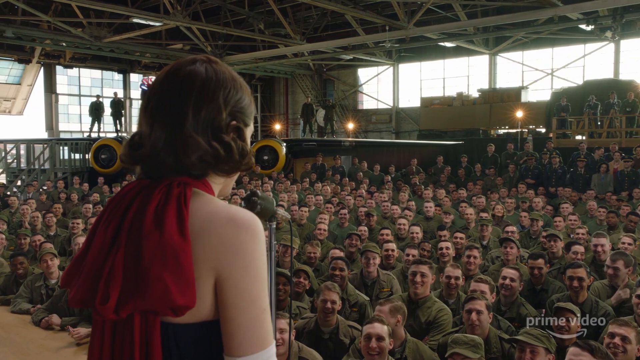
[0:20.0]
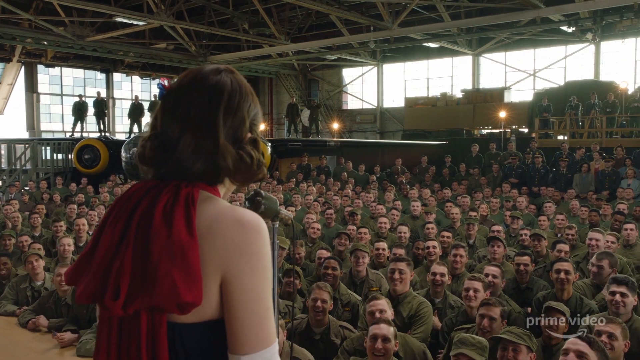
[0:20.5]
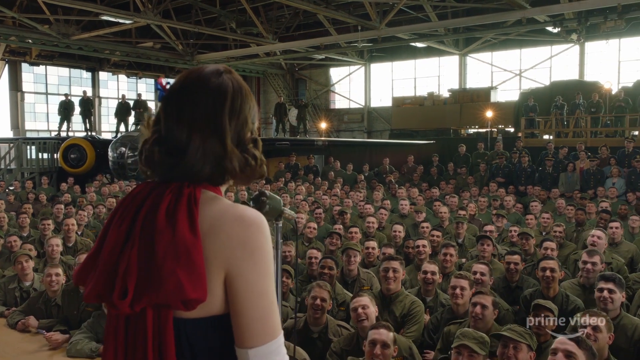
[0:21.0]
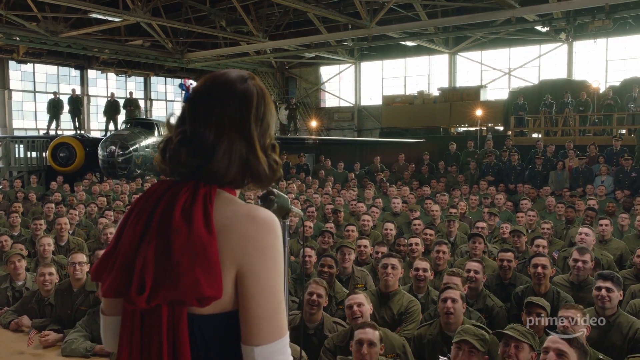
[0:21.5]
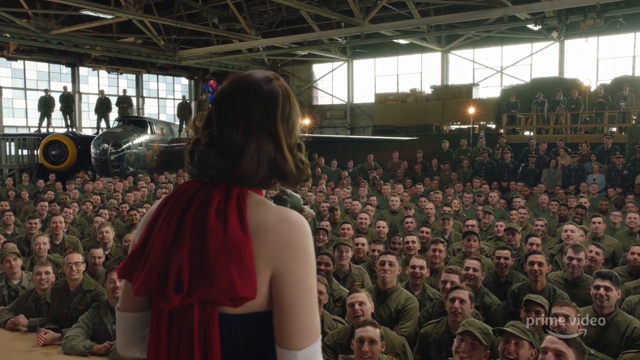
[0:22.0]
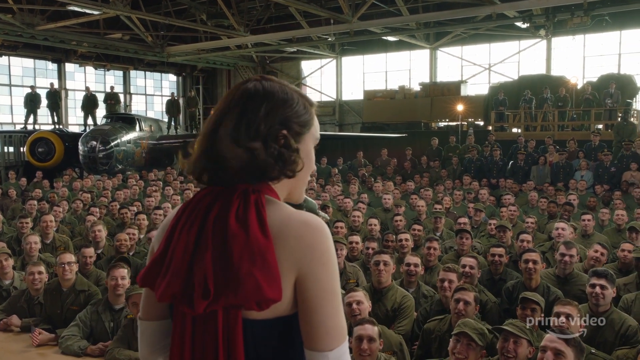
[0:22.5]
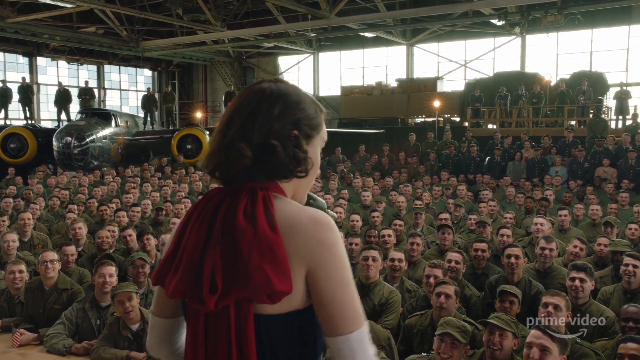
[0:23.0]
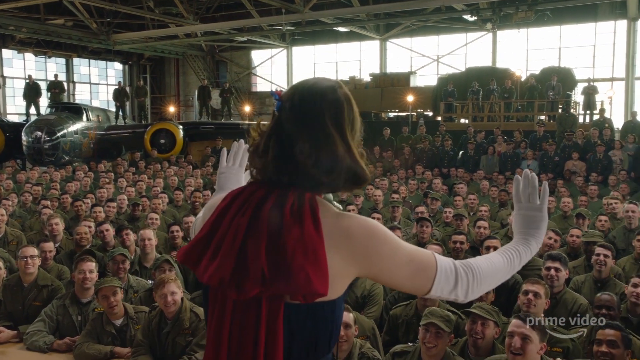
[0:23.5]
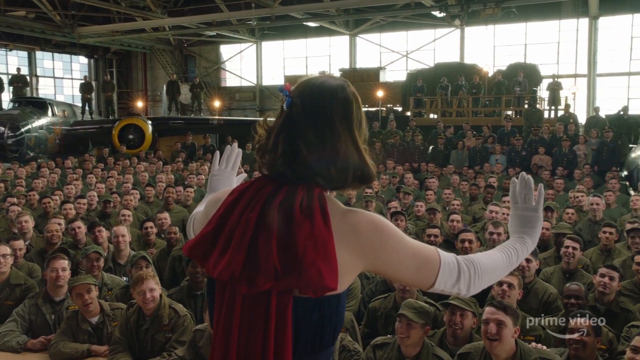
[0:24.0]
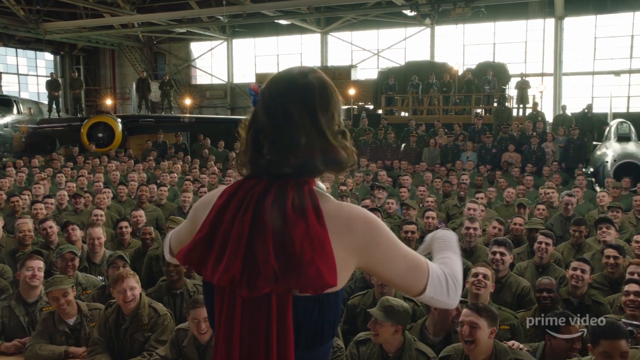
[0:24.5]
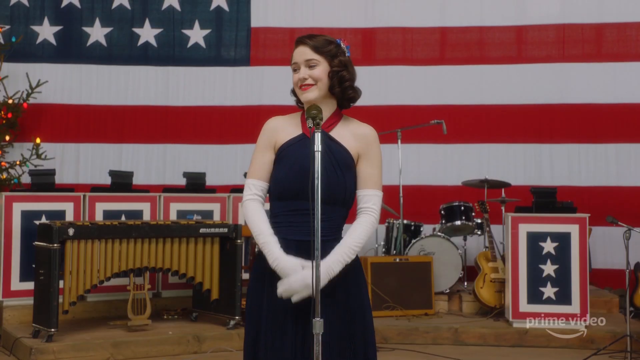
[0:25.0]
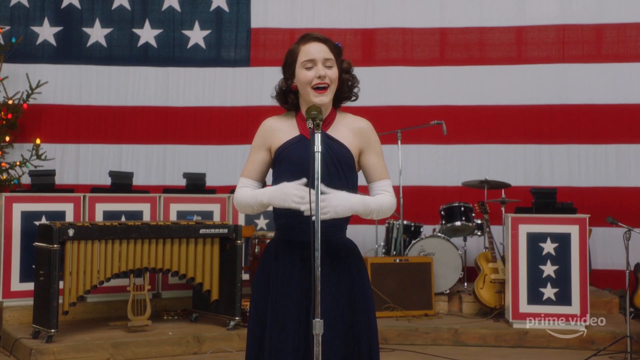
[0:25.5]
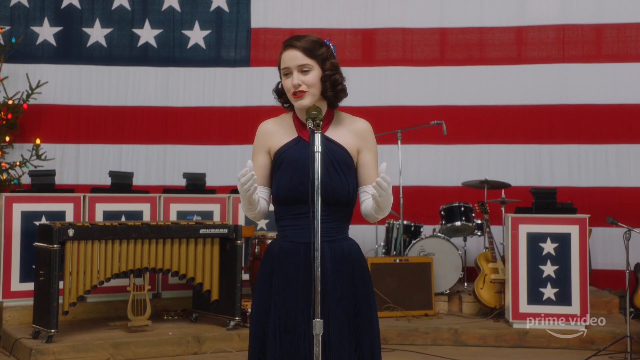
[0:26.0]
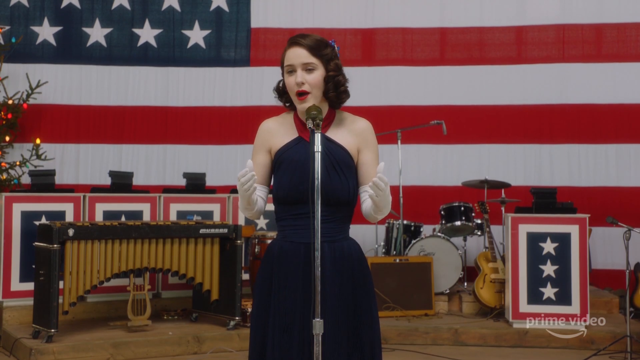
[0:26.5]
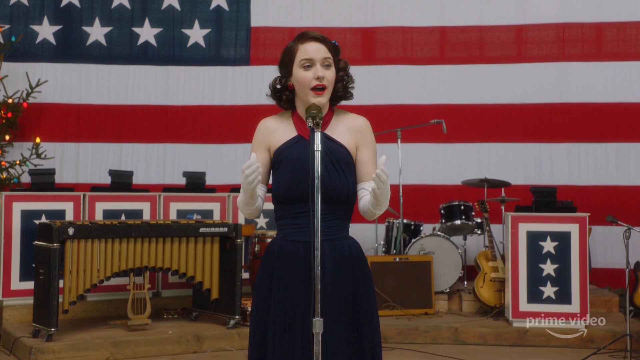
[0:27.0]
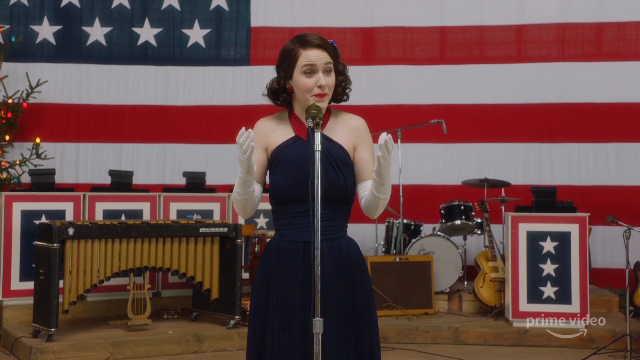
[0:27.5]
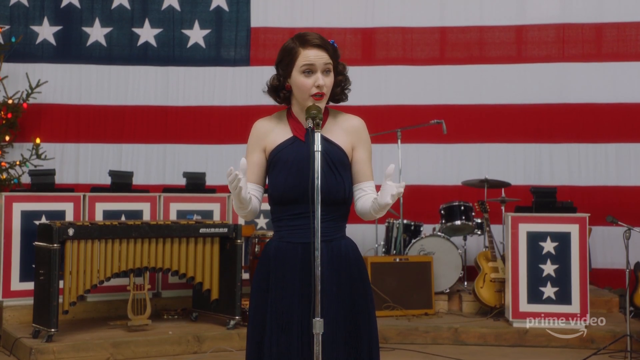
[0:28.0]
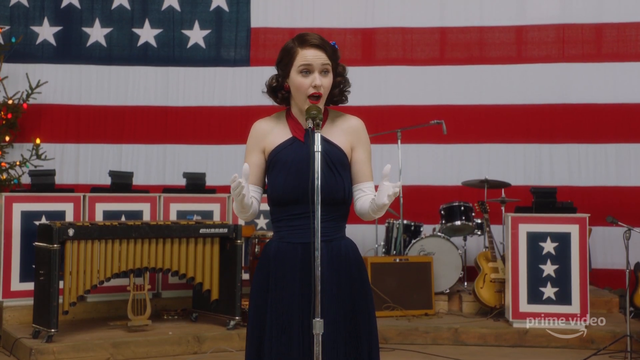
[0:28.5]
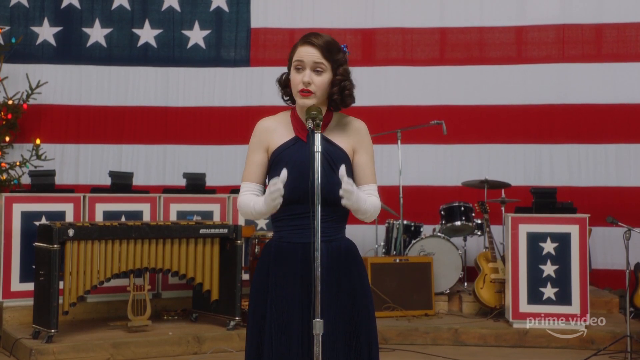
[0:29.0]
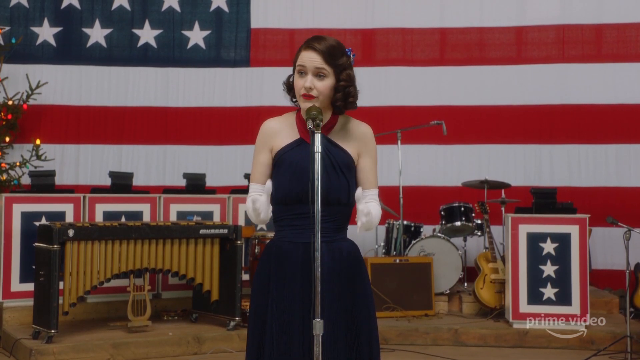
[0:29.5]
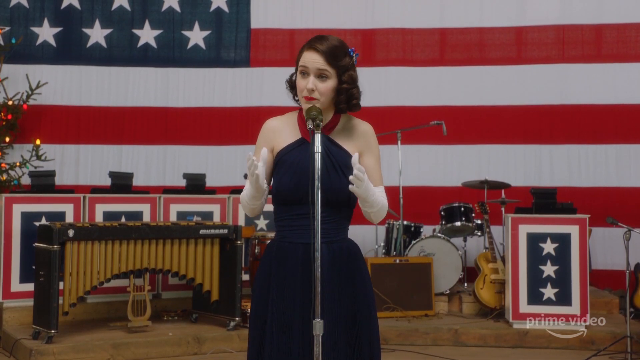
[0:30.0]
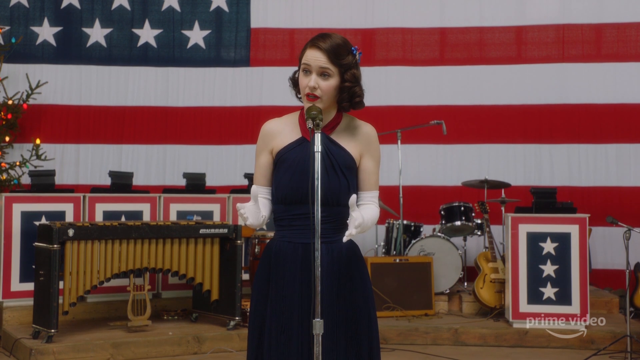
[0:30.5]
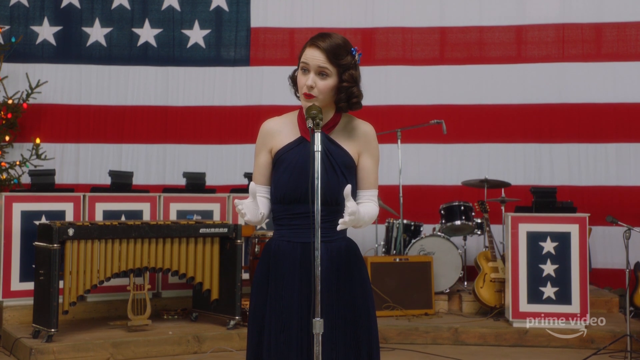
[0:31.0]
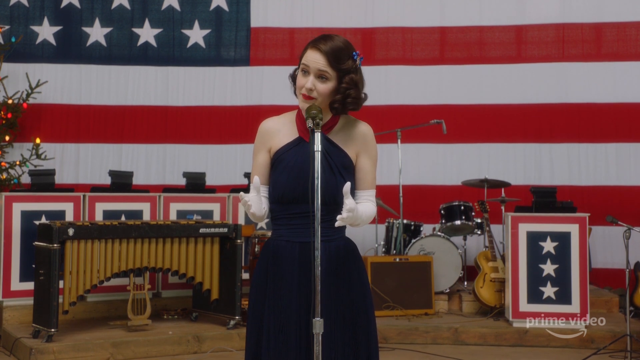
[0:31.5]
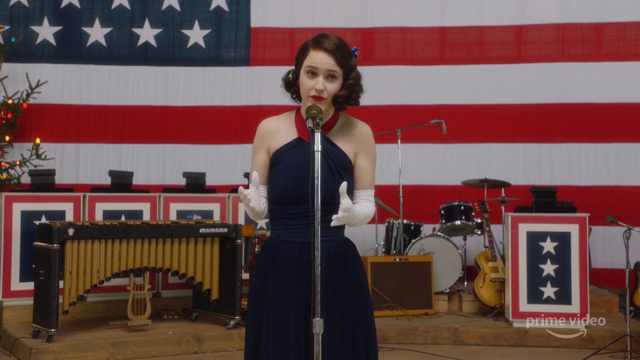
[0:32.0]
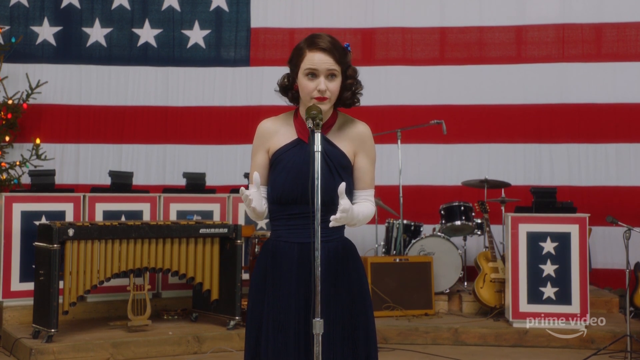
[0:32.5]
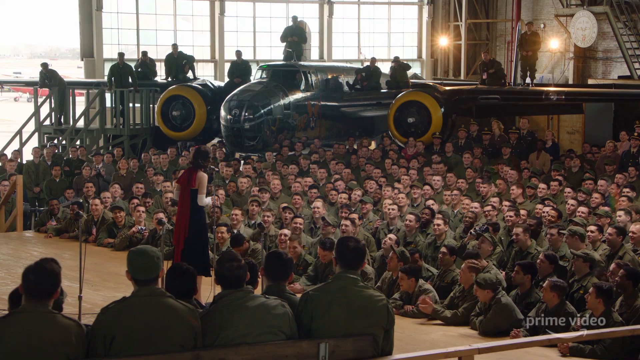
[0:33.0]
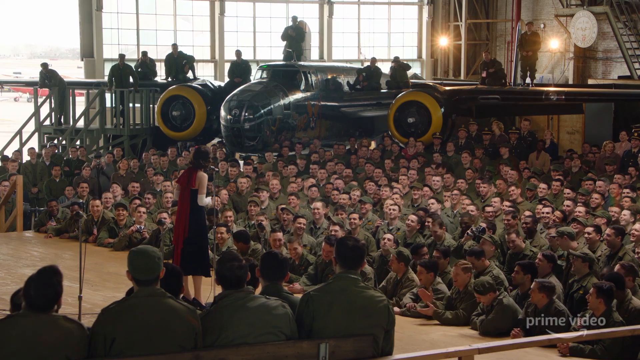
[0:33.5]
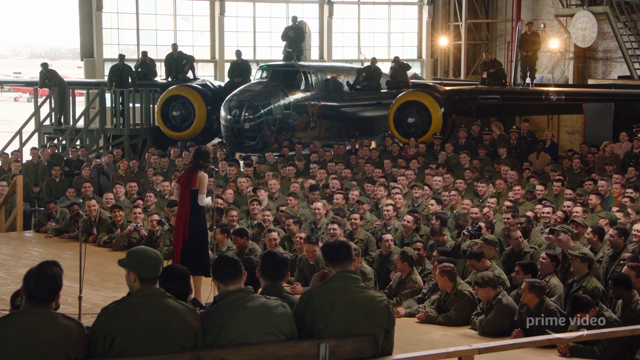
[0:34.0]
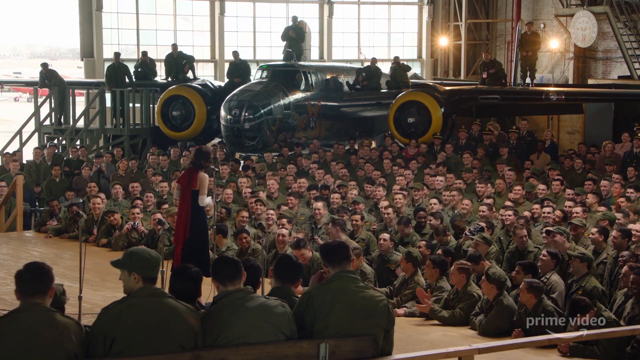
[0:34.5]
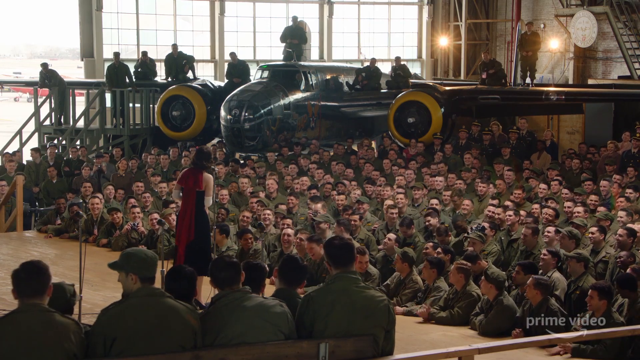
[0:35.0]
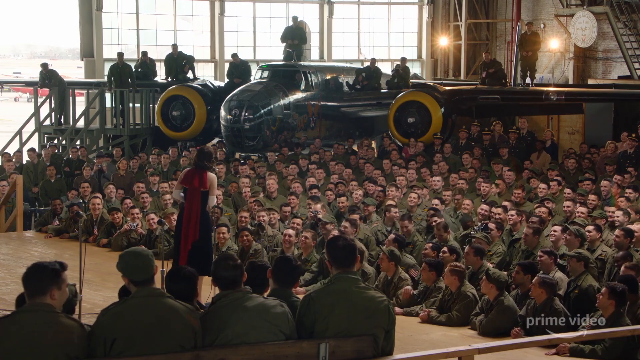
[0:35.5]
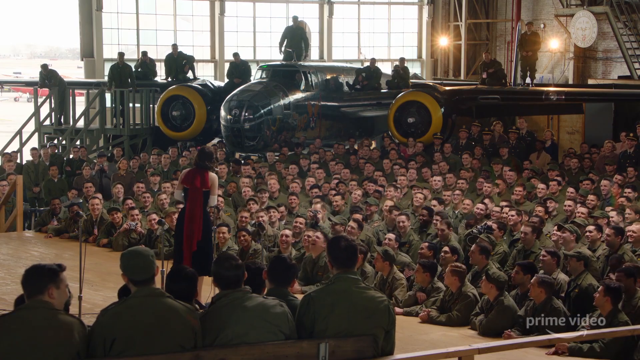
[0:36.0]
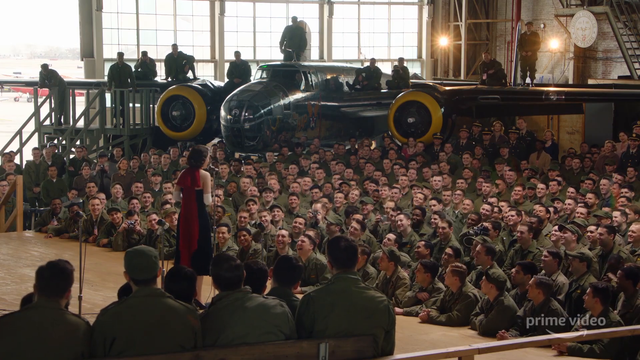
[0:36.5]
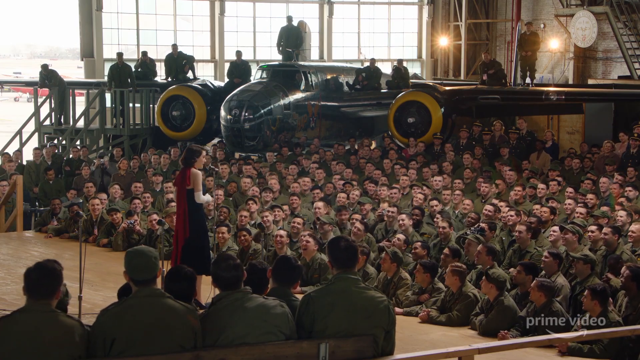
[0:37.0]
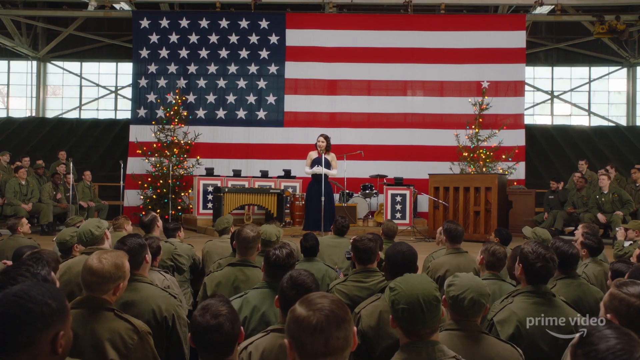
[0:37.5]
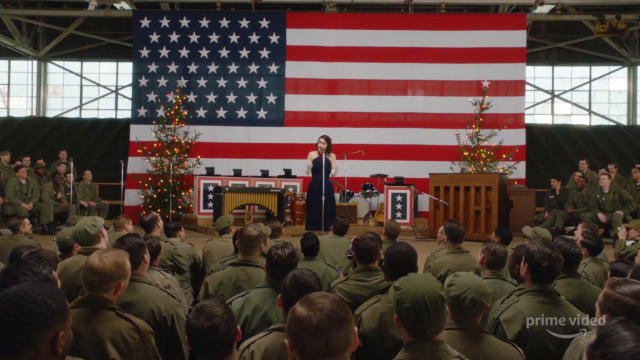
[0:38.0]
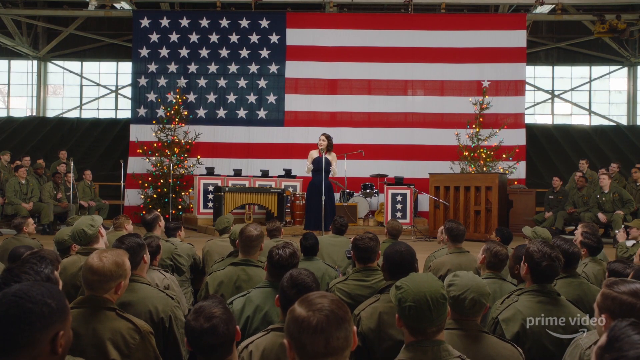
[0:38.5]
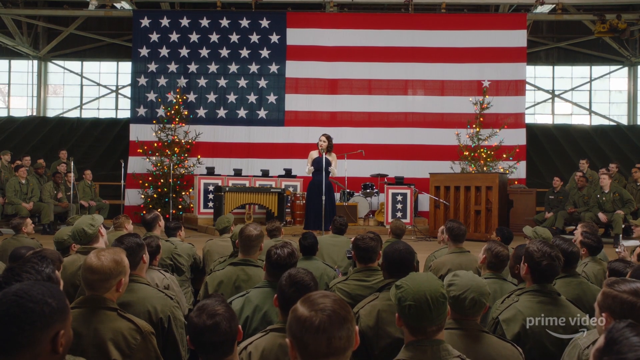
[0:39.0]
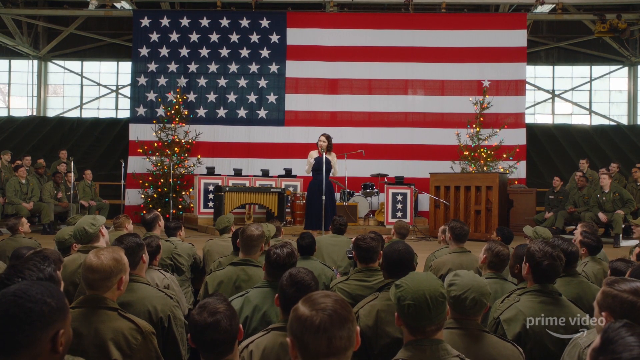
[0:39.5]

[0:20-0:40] The lady in red continues her performance as soldiers listen. An aeroplane is in the hangar, and some soldiers stand on its wings; judging by the hangar and the aeroplane, the scene appears to be set in the mid-1950s. Soldiers at the far back enjoy the performance. She wears a red scarf and a blue dress, and she is white. Musical instruments are in the background, but no one is playing them; she is alone on the stage performing solo, apparently a comic spoken-word act, as the soldiers laugh while looking at her.